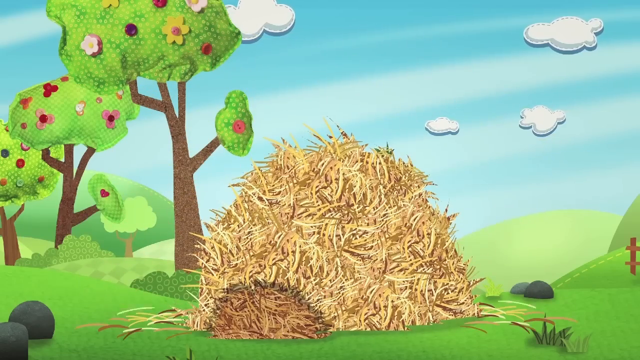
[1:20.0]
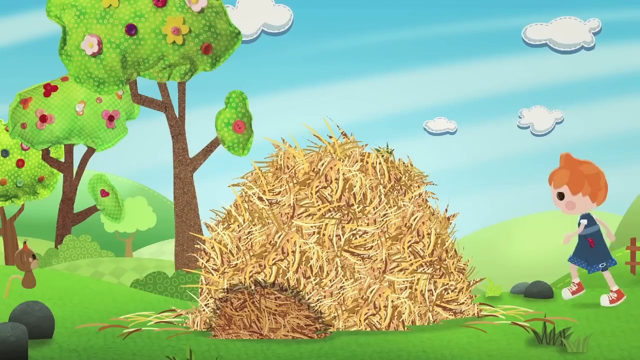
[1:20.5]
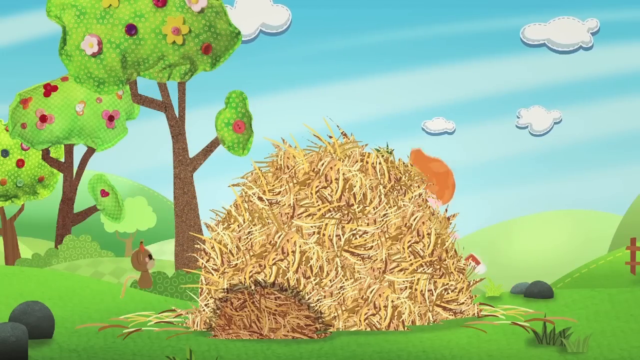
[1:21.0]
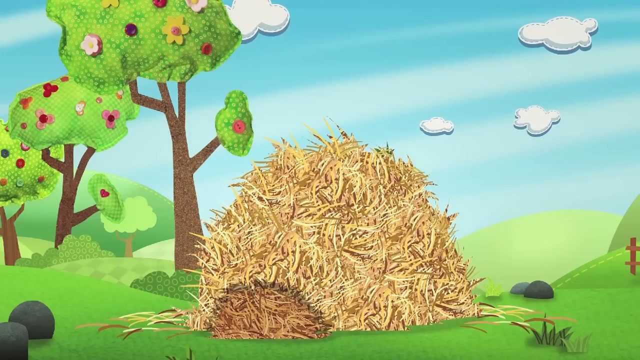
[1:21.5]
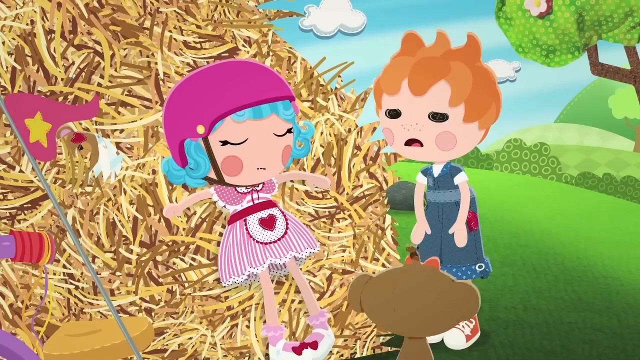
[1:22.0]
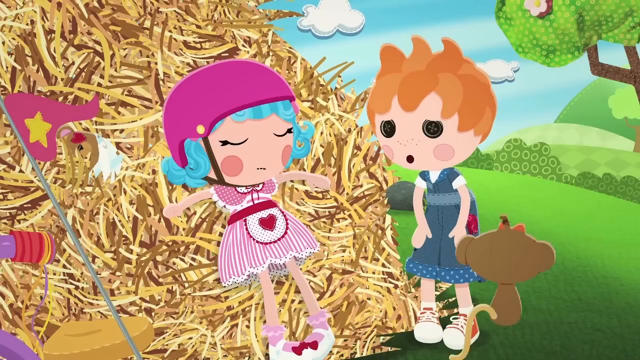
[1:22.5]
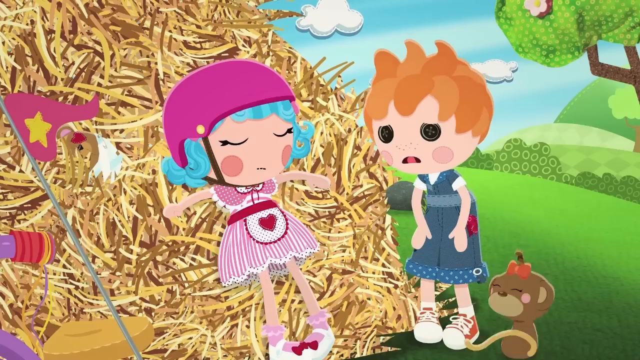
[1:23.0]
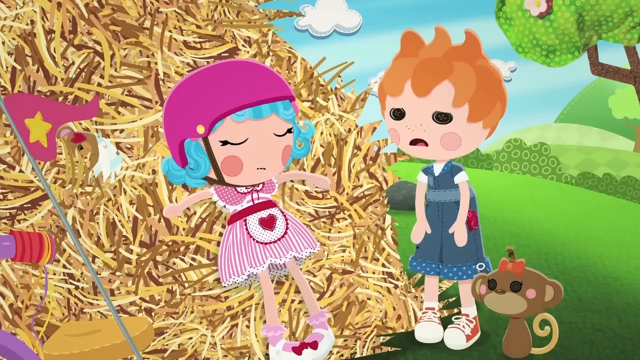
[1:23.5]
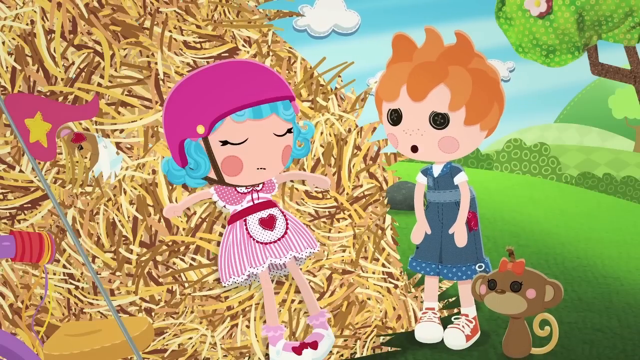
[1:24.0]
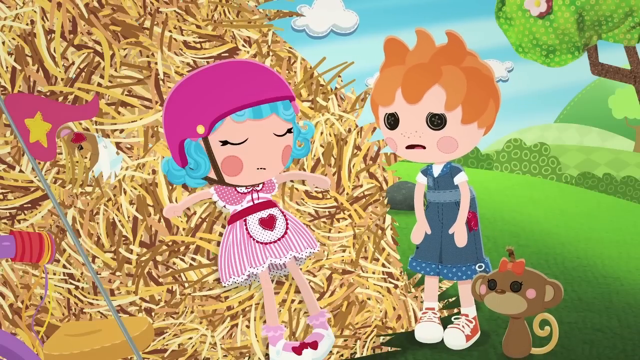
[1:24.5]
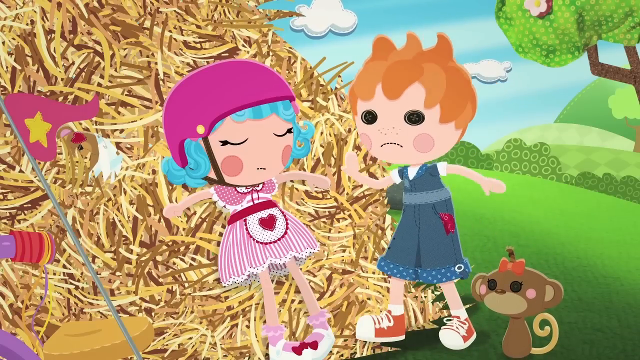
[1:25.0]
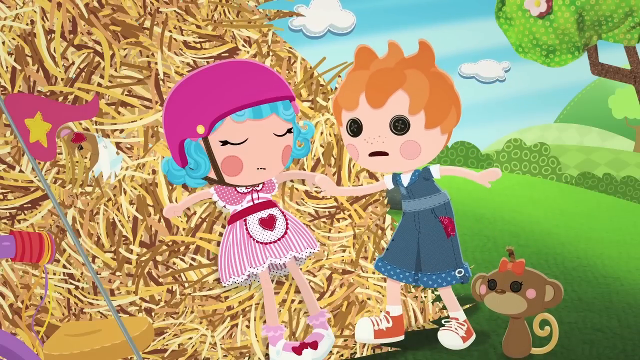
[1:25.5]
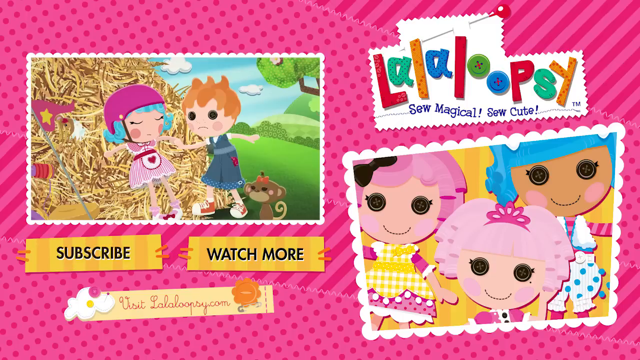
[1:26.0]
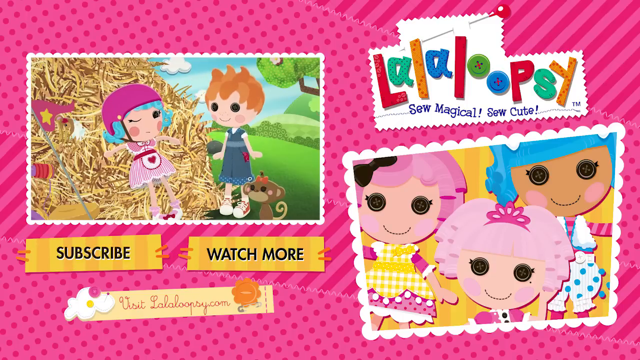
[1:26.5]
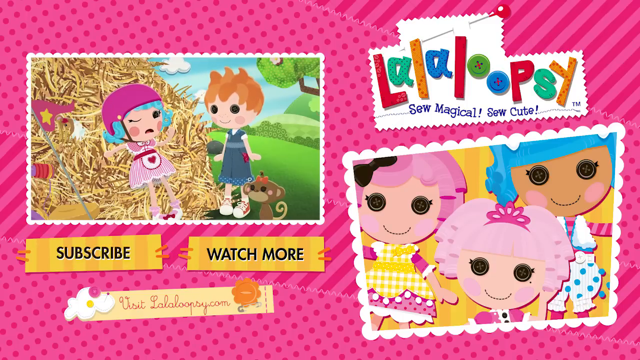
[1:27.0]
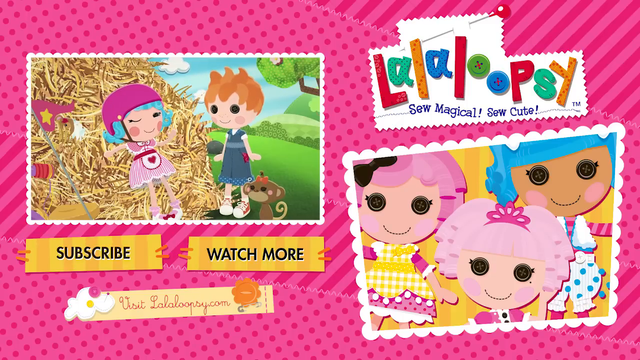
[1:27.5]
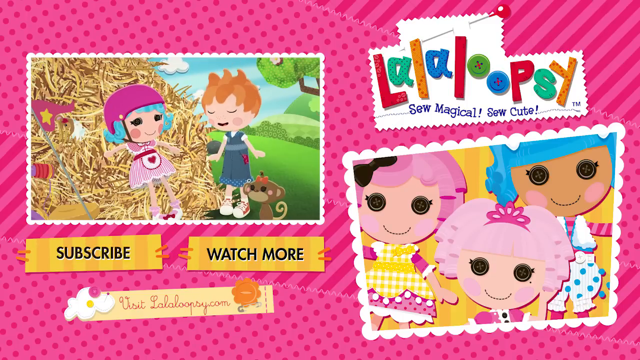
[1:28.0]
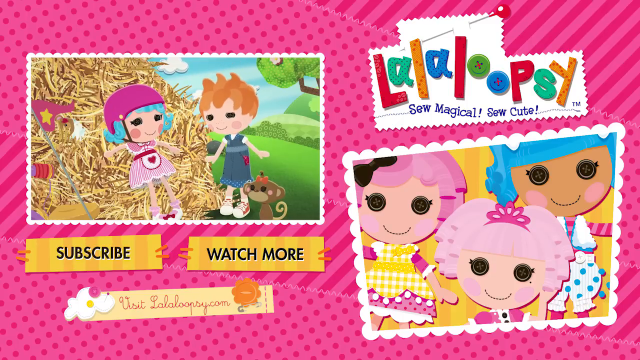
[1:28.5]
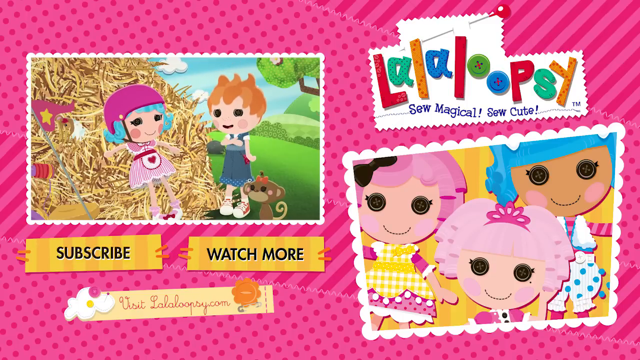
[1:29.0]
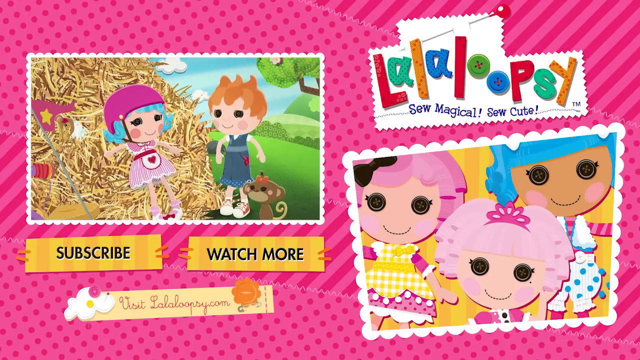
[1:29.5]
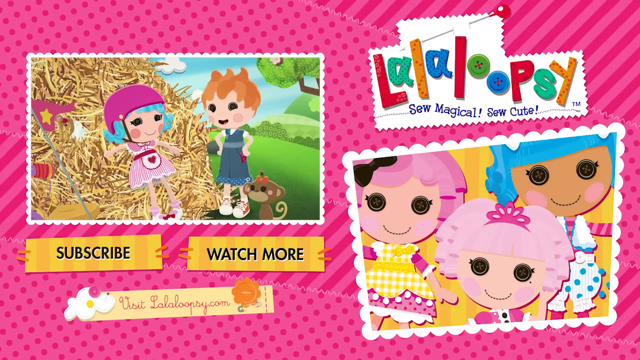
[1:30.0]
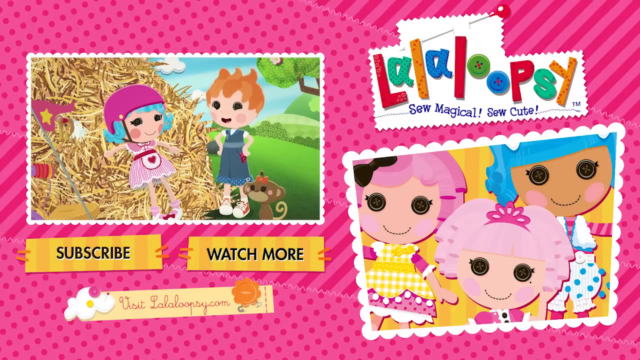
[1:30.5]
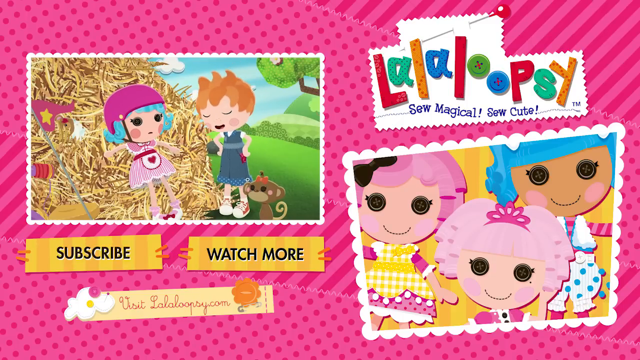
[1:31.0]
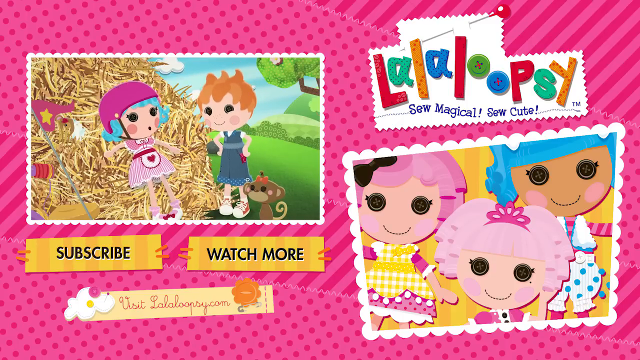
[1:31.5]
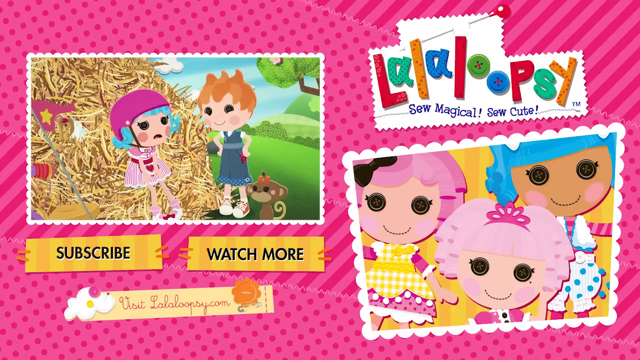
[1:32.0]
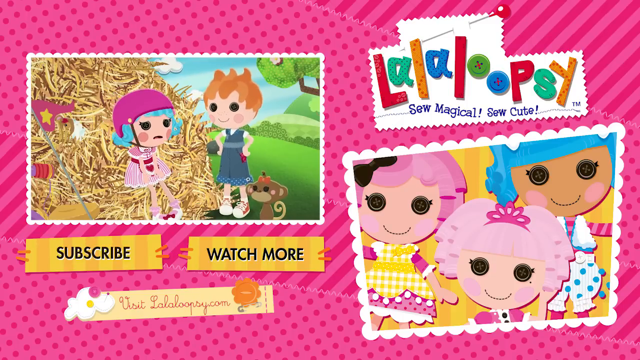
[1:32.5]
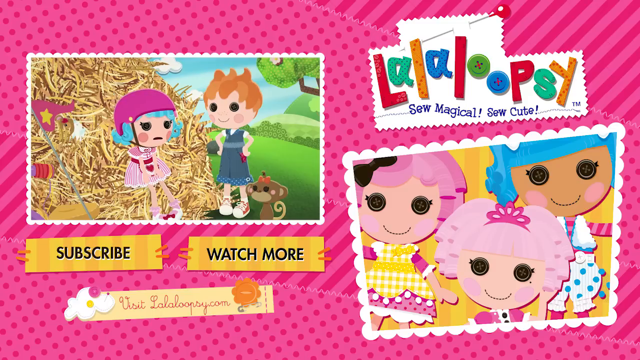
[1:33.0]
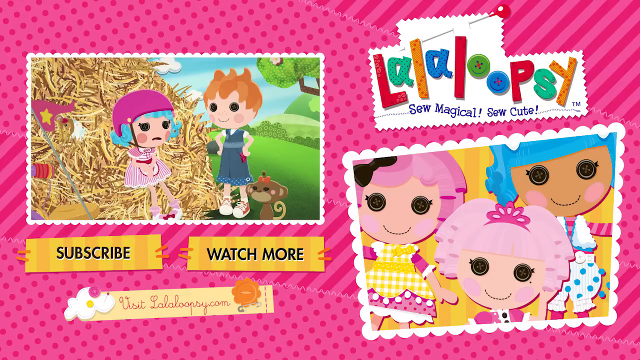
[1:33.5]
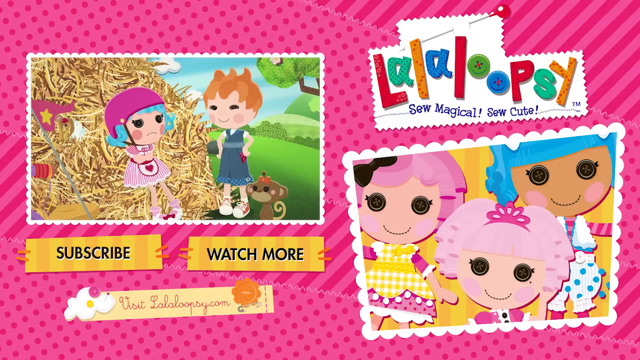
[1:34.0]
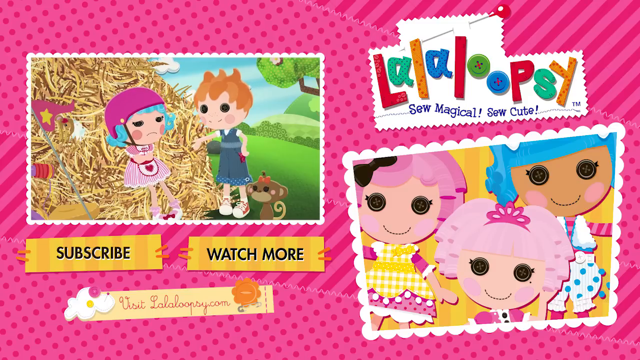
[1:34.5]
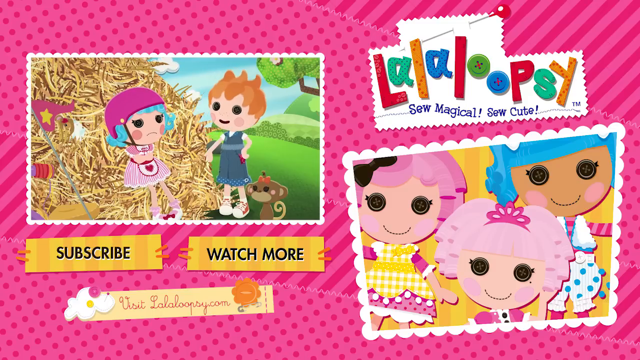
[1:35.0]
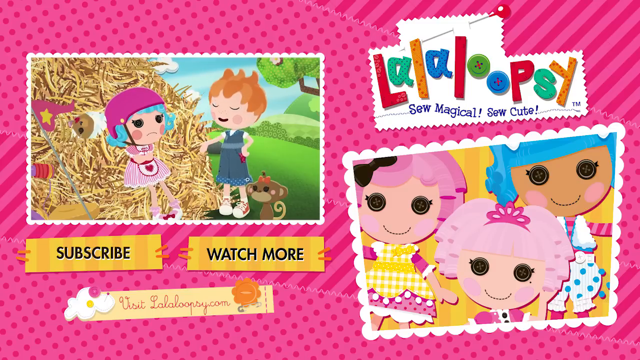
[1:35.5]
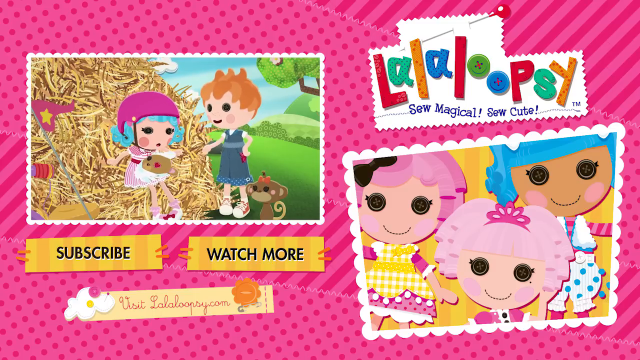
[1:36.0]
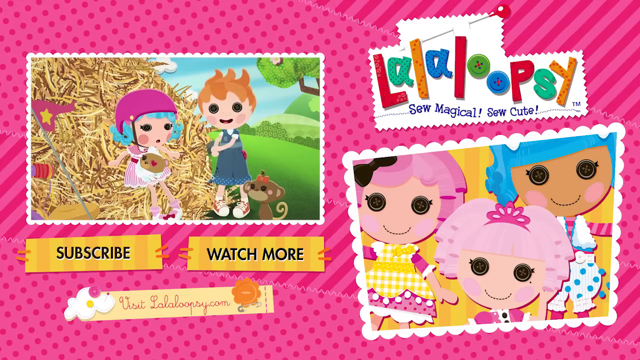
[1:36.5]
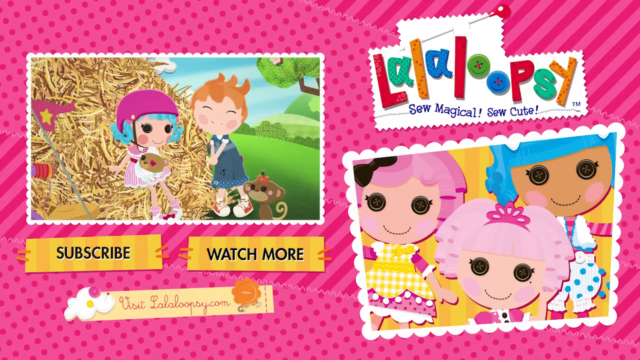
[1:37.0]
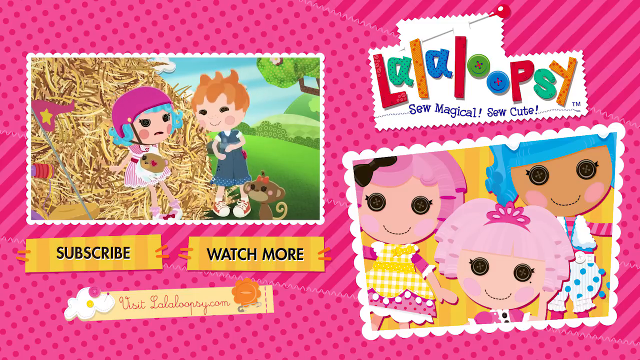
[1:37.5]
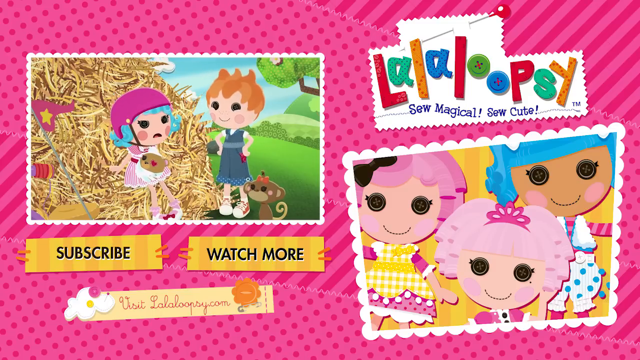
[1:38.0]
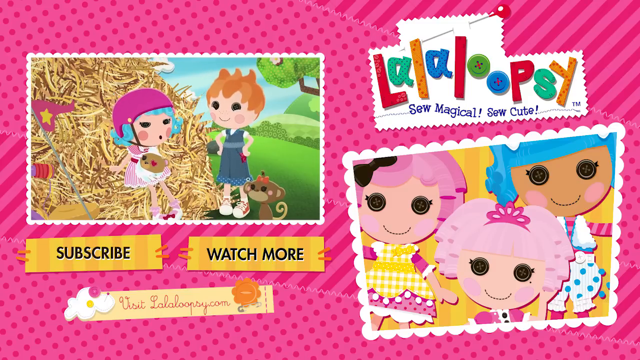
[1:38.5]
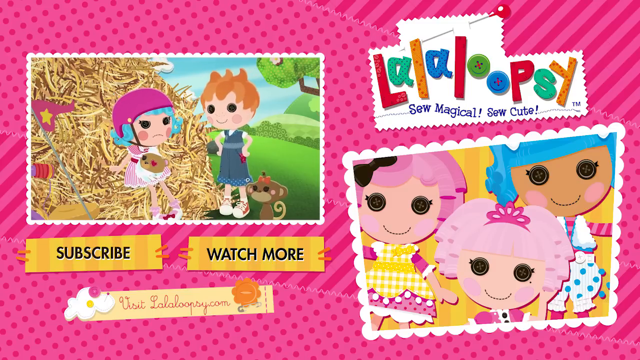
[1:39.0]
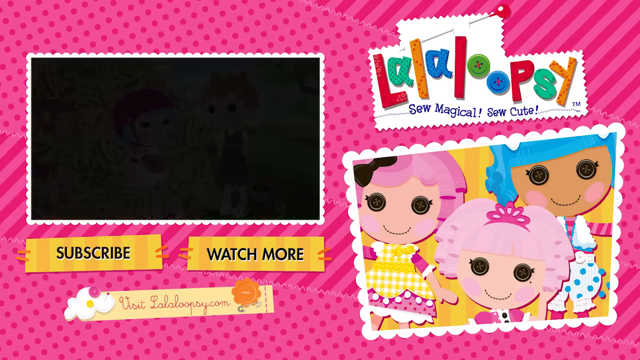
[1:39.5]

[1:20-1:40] The cute, kid-friendly animated show of dolls with buttons for eyes continues. The girl with blue hair has just crashed her bike into a hay bale, and she is shown on the hay bale waking up. She seems happy and excited about it as she talks to a boy with orange hair, who makes sure she is okay; he has a monkey. The video then transitions into an outro screen, like one seen on YouTube, that says "subscribe" and to watch more, with the show's title, La La Loopsie. The show continues to play, showing them still conversing on the hay bale, and the video ends on this outro screen.